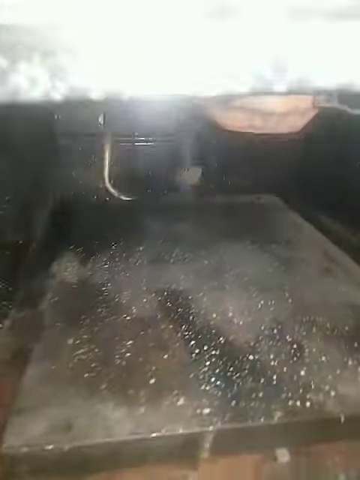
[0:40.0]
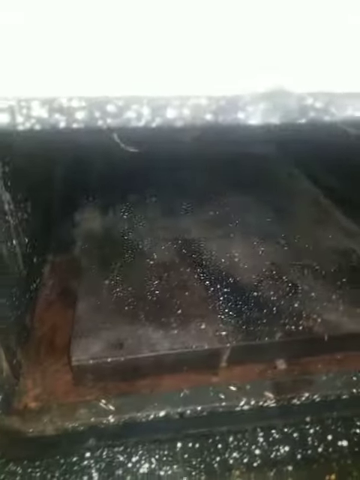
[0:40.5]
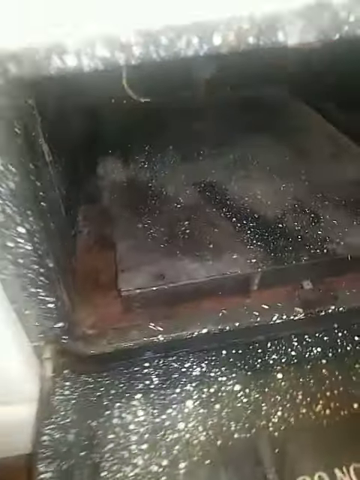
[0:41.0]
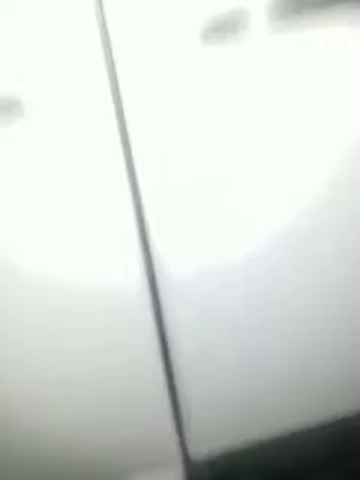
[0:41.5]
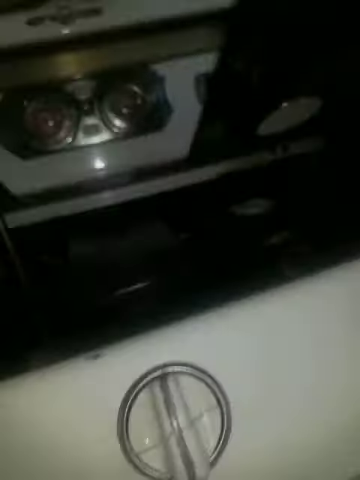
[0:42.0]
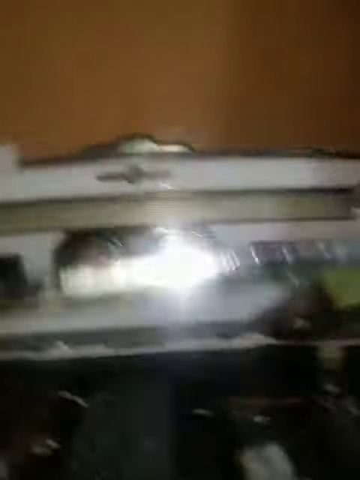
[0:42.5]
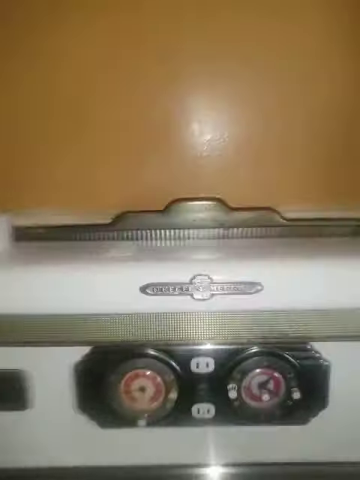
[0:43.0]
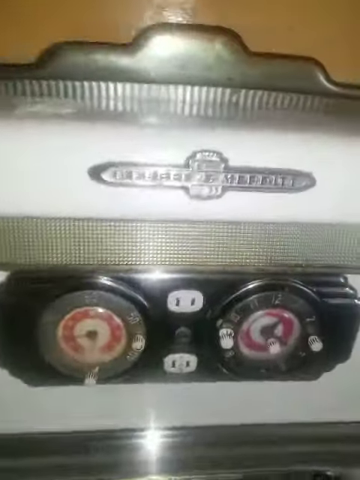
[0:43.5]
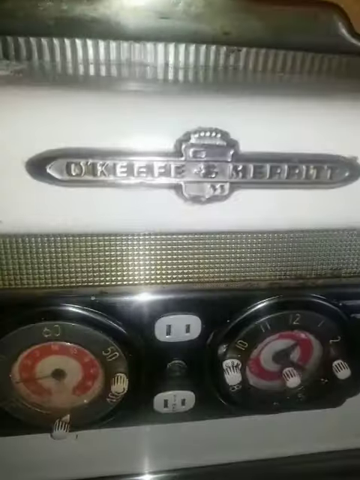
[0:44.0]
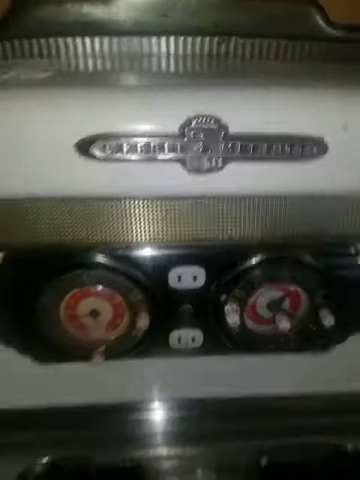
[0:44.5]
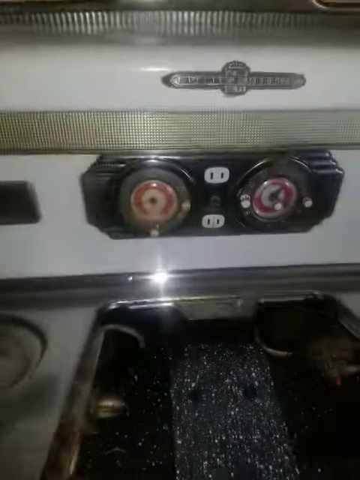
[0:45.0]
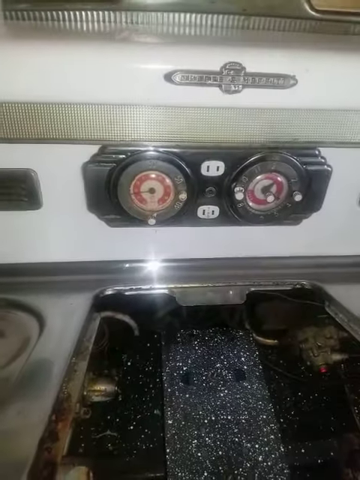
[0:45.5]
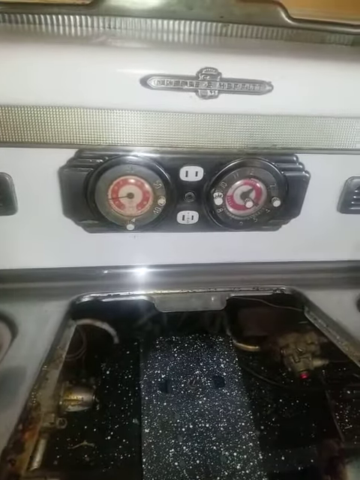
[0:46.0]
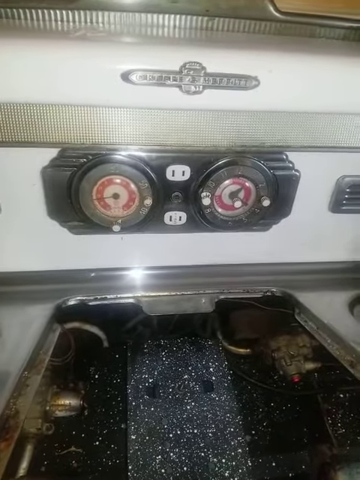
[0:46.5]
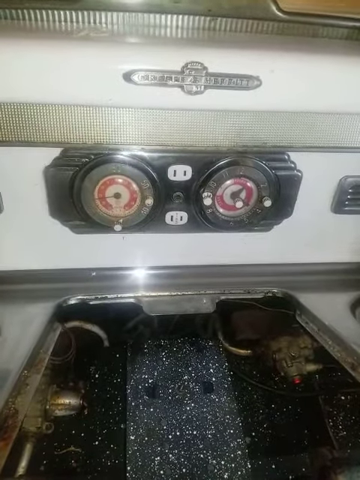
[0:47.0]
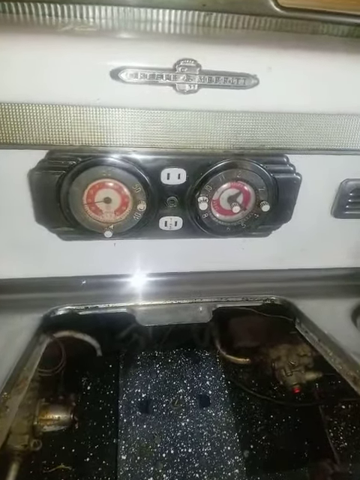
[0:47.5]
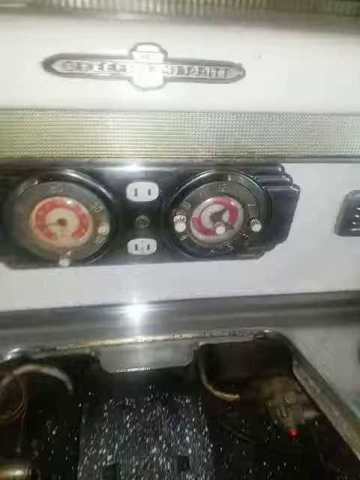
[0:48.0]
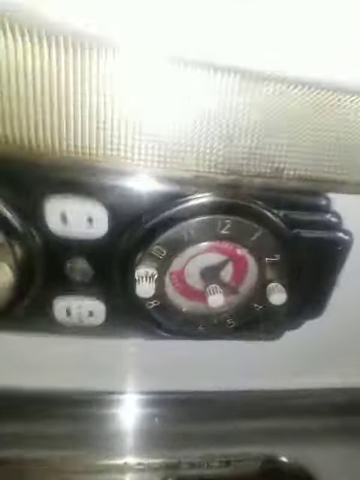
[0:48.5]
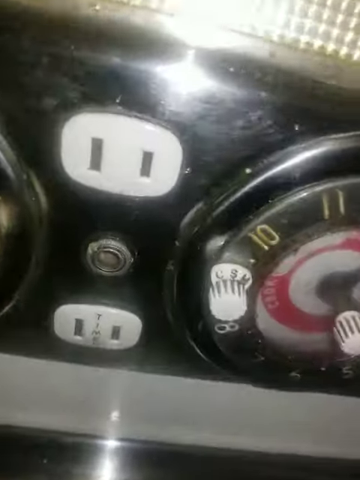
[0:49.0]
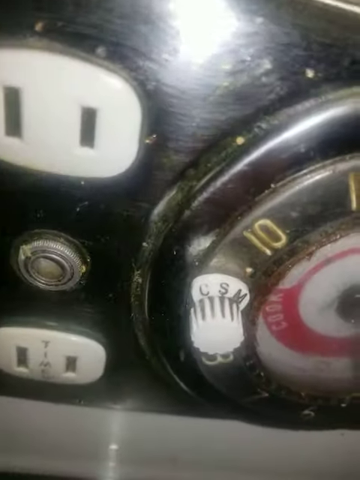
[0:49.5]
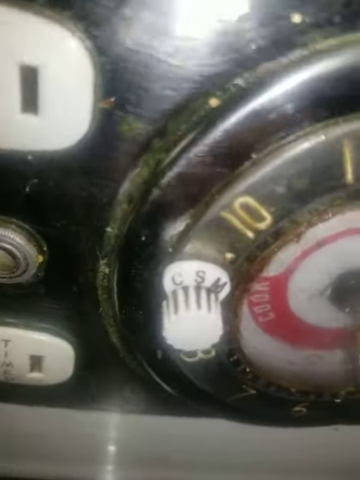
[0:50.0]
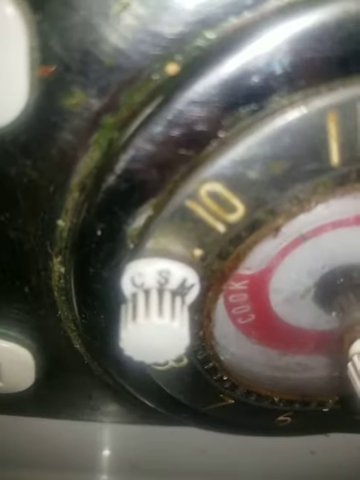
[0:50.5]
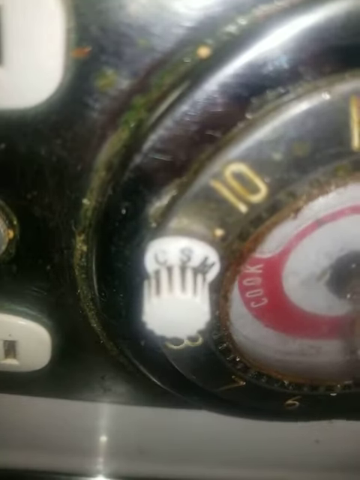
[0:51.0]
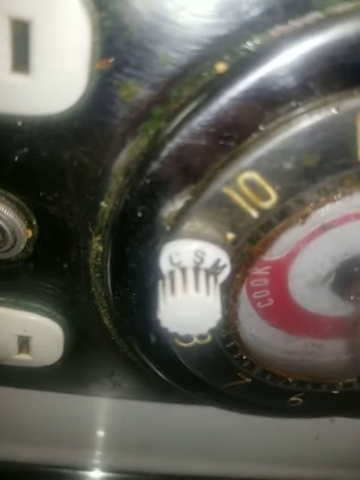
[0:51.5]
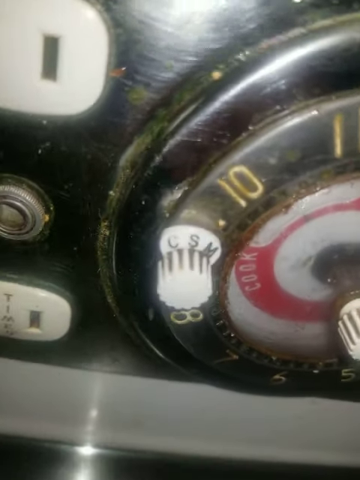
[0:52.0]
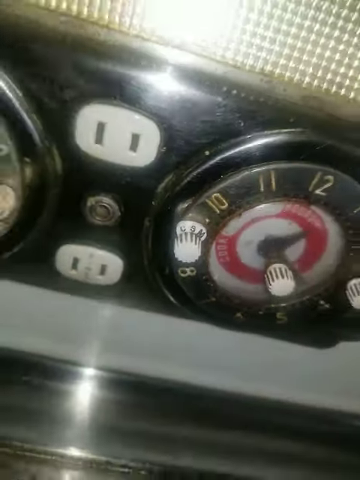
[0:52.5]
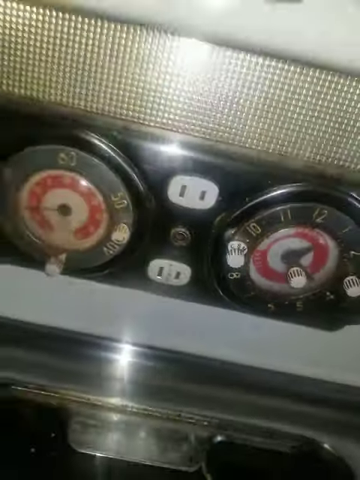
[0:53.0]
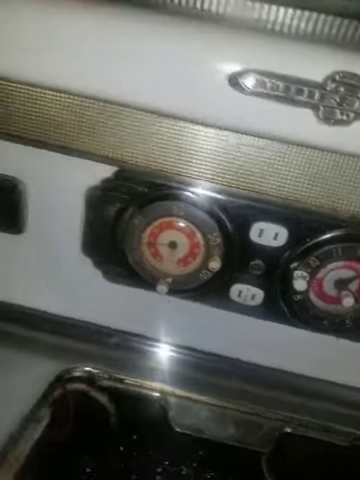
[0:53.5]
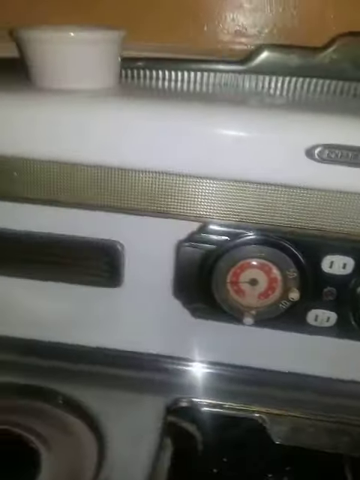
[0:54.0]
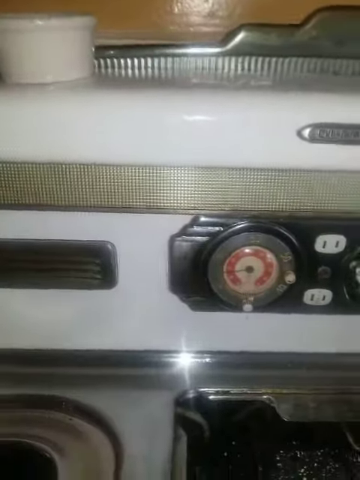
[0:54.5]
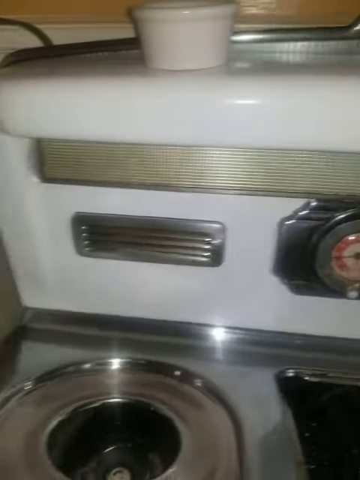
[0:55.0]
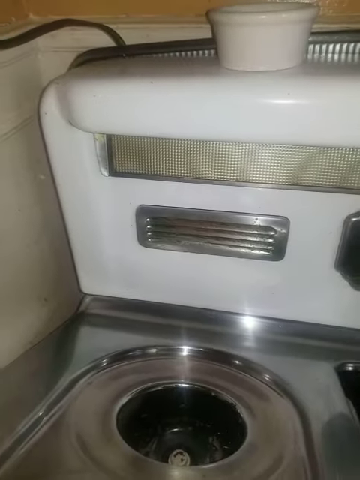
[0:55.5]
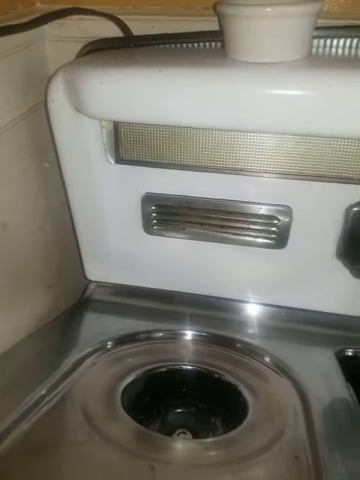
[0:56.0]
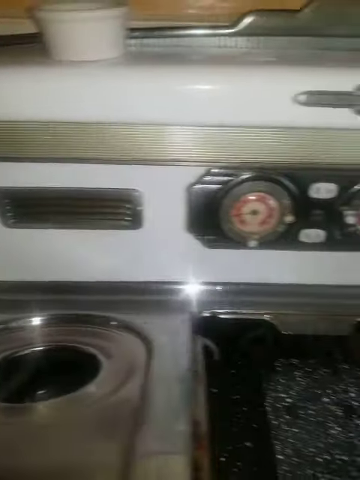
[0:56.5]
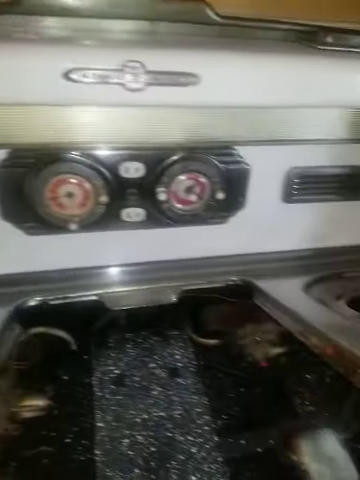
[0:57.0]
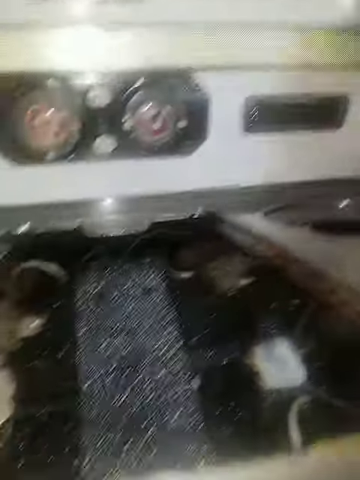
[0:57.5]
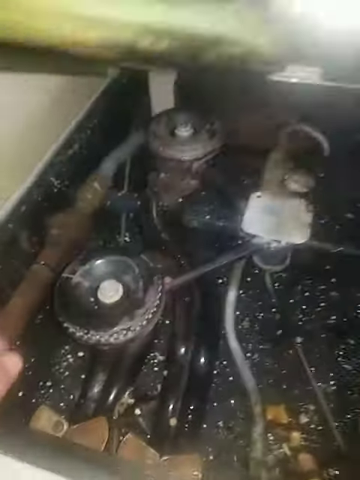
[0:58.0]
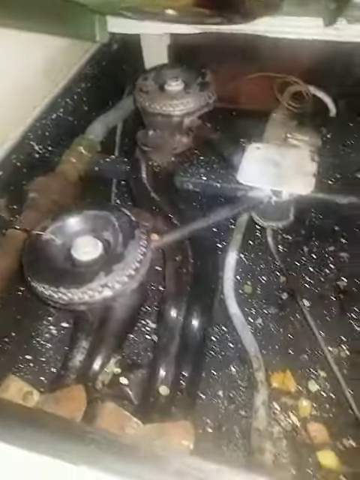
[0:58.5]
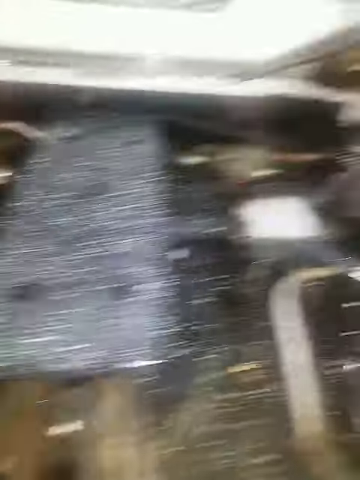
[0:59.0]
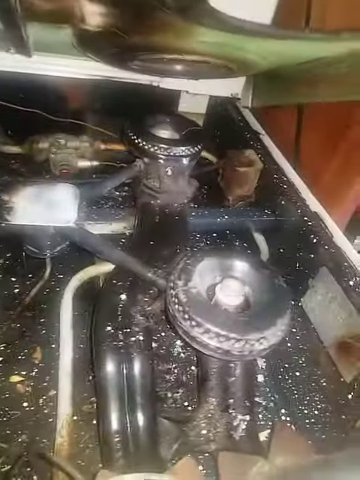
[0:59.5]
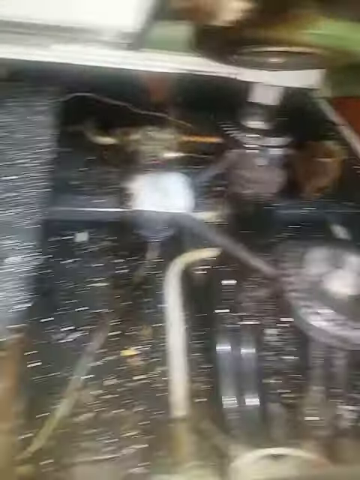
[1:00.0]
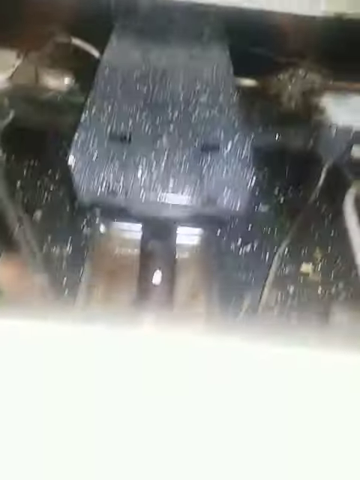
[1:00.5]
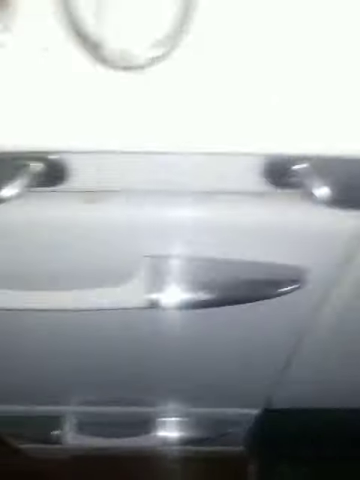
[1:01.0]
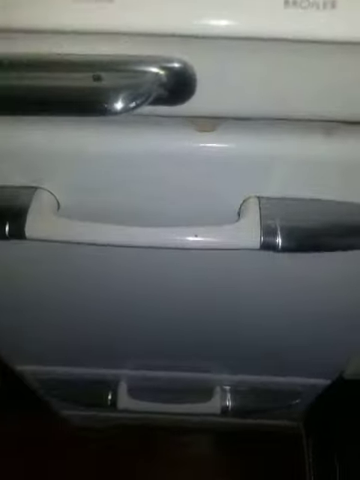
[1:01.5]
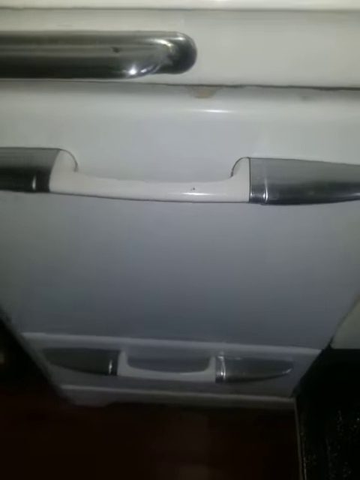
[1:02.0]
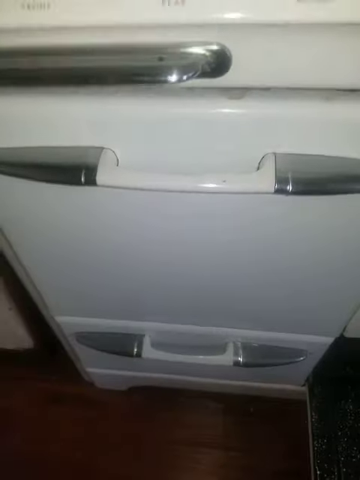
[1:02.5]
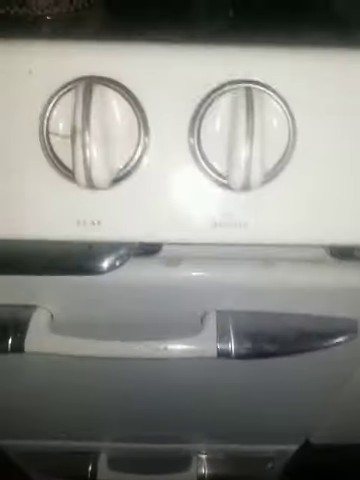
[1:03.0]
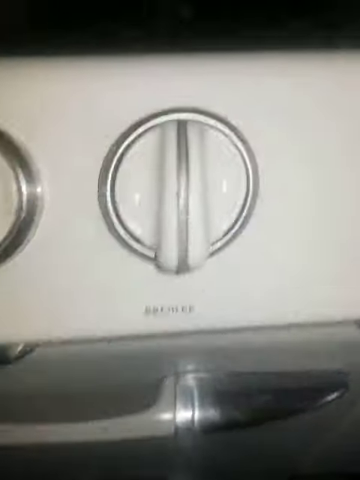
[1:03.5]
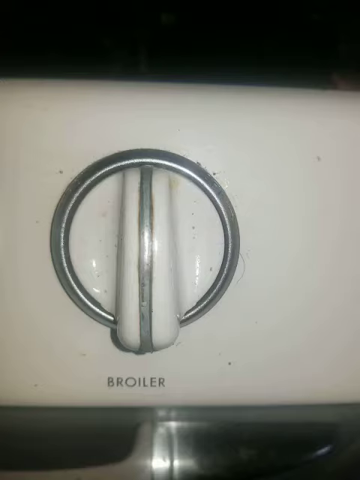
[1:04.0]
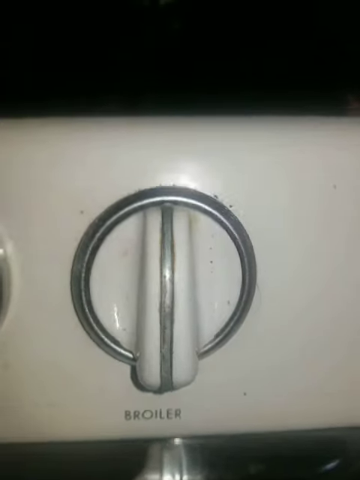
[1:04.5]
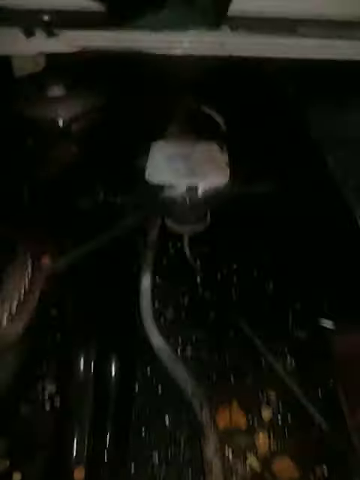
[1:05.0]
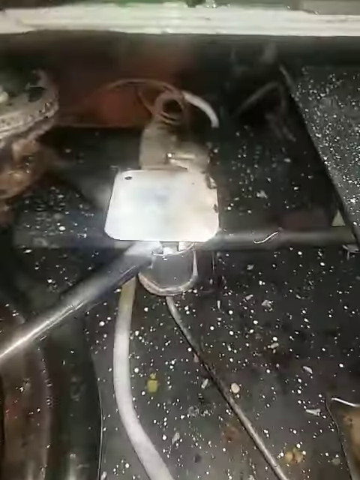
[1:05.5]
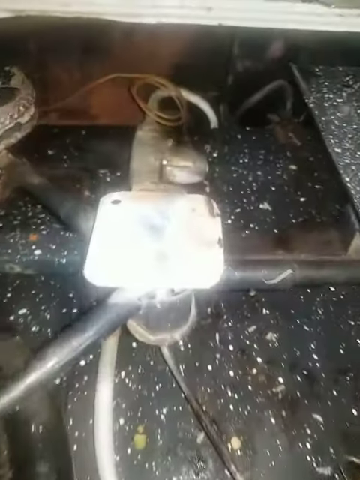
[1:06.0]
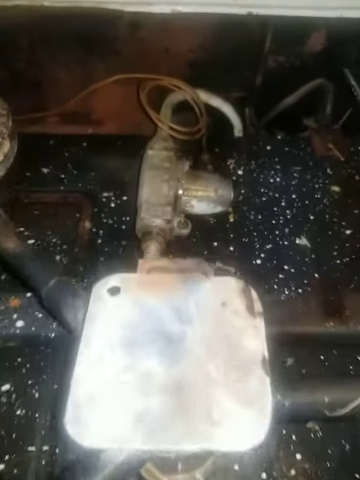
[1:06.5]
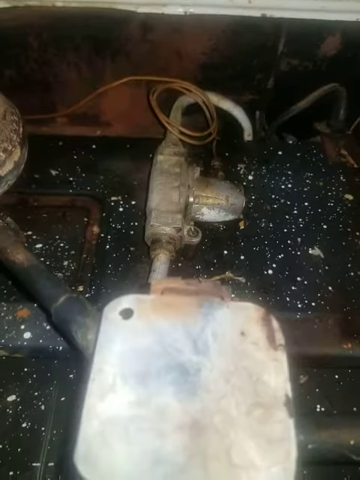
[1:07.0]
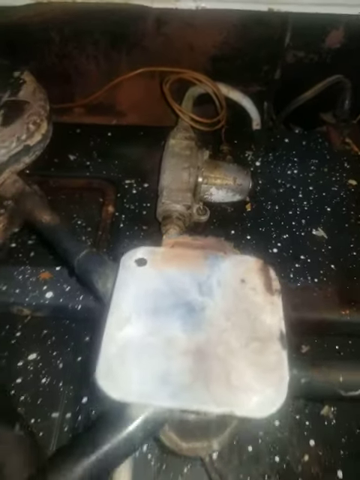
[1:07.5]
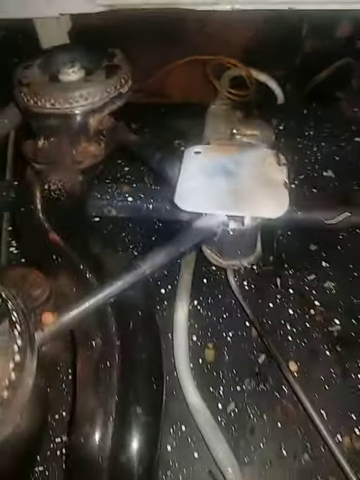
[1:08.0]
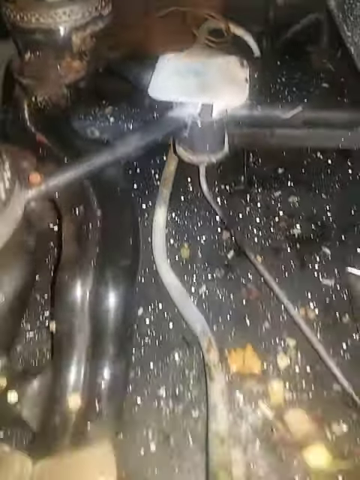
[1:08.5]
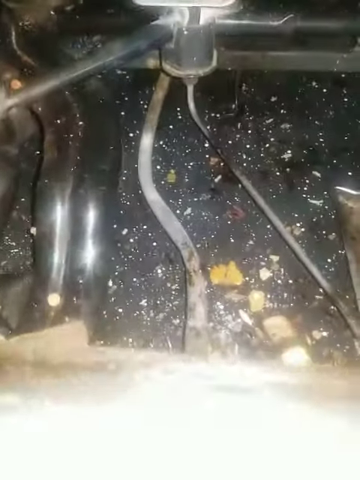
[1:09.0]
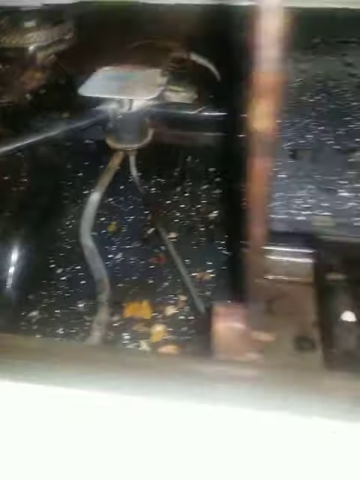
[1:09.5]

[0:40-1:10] Starting inside the device, the camera moves out of it, and the first thing visible is a white knob. The view reveals that the device is an oven, apparently of the brand O'Keefe & Merrit, with timers on it, probably one for the timer and the other for the oven temperature. The oven and stoves have been disassembled and are clearly being fixed. The camera zooms in on a little knob for the timer or the temperature, then goes back into the stoves, showing the many parts and pieces that may need fixing, along with the knobs to turn the gas on. The oven appears to have one oven on the top and one on the bottom, or at least two doors.